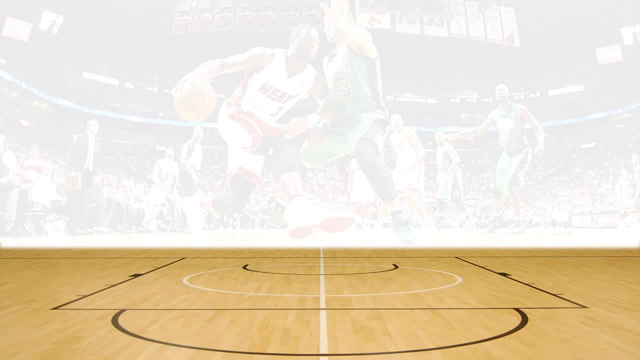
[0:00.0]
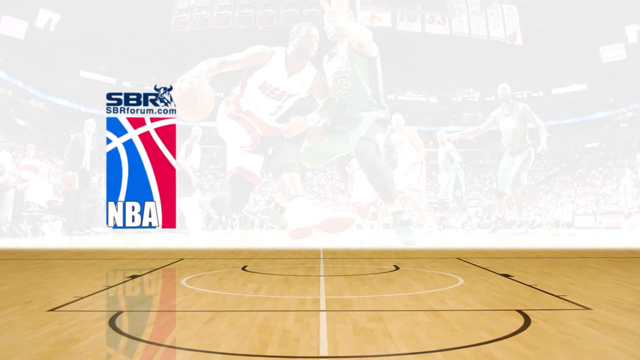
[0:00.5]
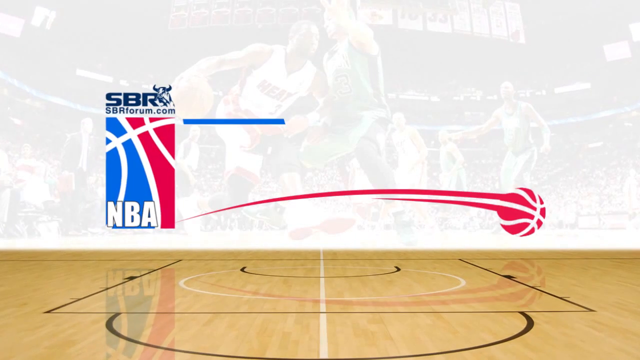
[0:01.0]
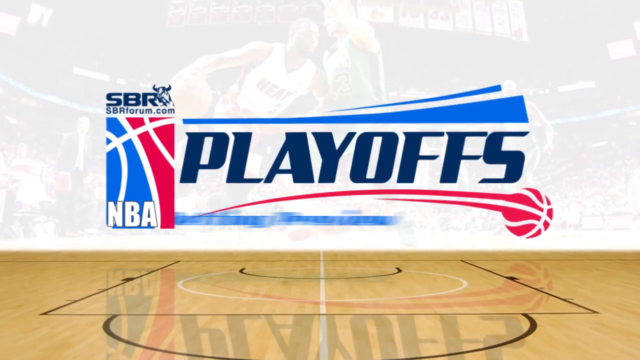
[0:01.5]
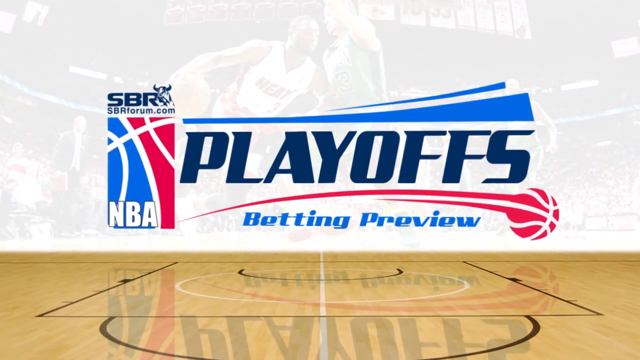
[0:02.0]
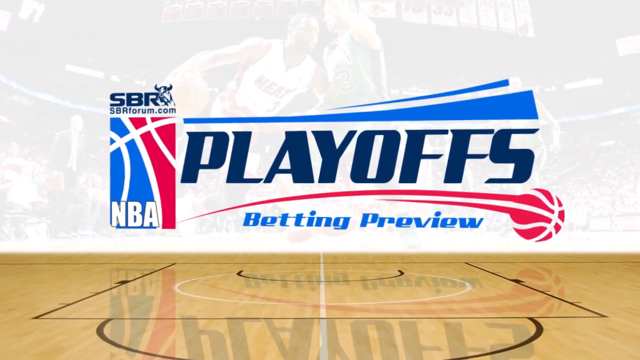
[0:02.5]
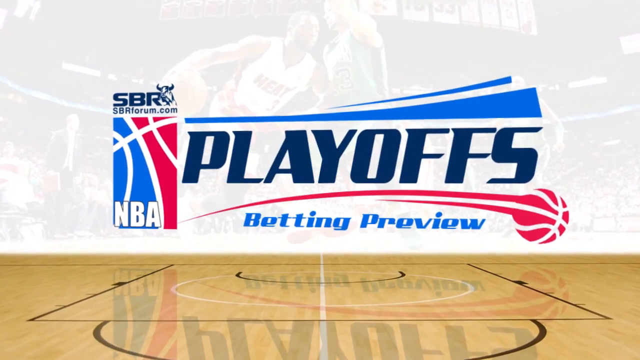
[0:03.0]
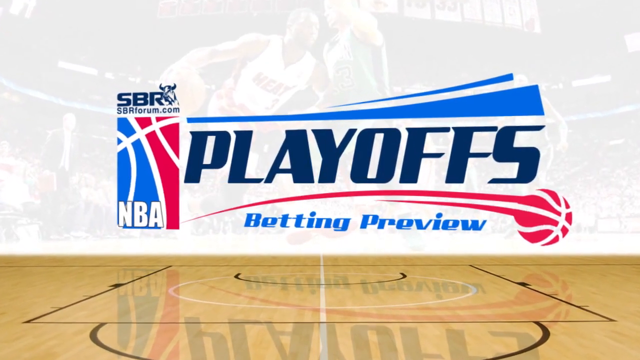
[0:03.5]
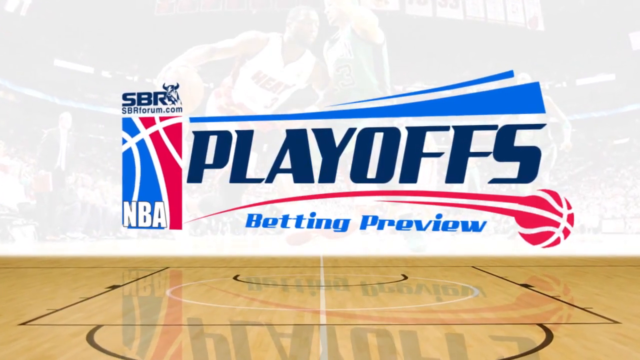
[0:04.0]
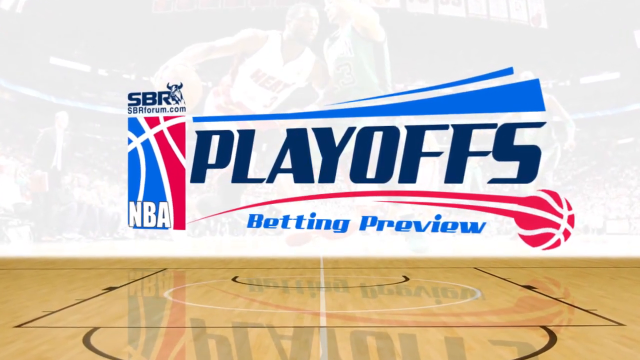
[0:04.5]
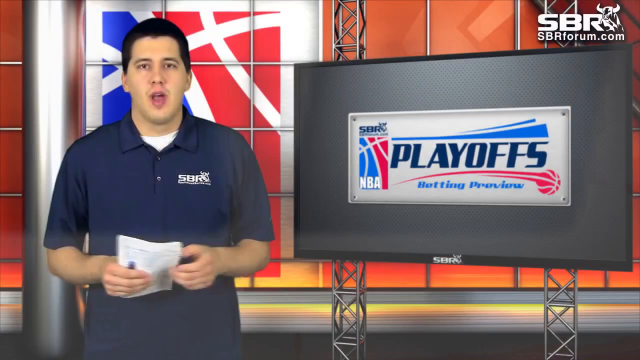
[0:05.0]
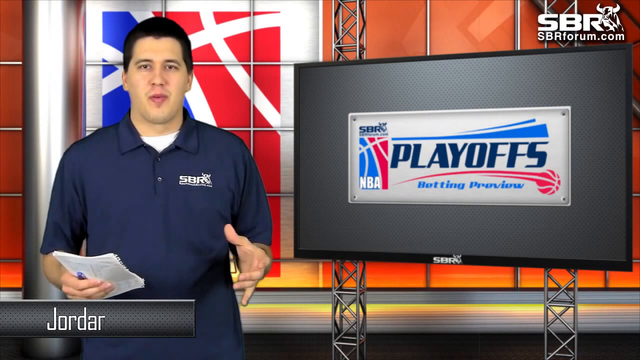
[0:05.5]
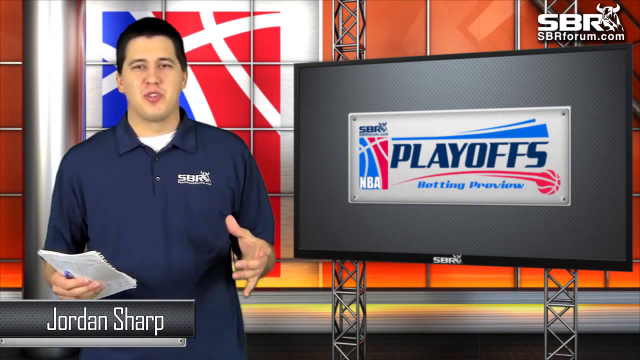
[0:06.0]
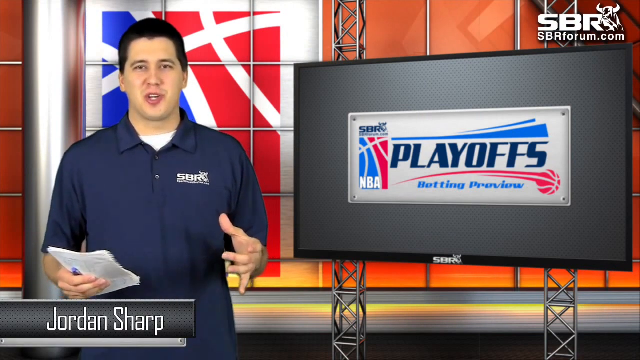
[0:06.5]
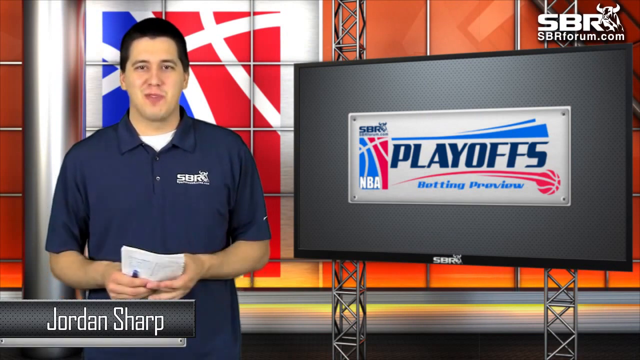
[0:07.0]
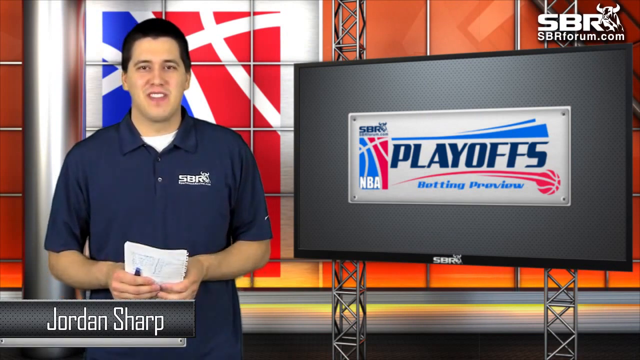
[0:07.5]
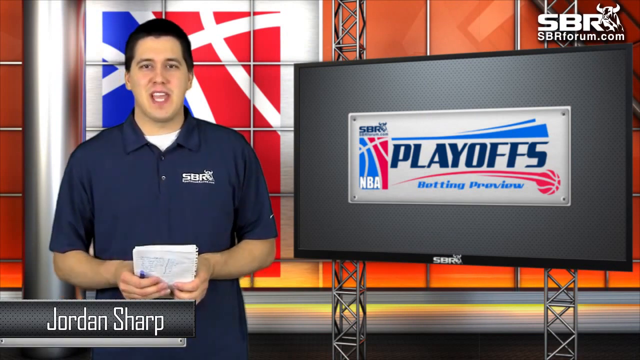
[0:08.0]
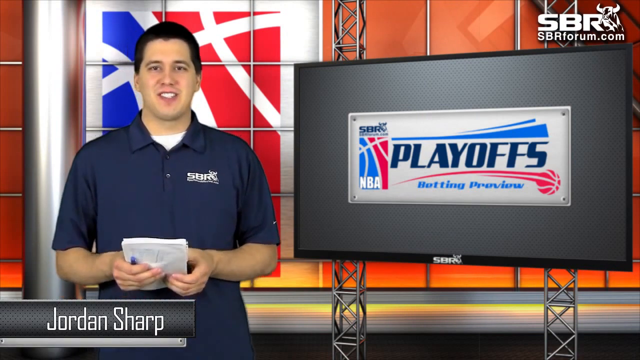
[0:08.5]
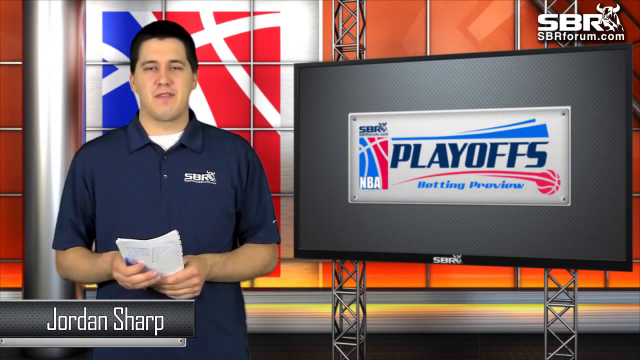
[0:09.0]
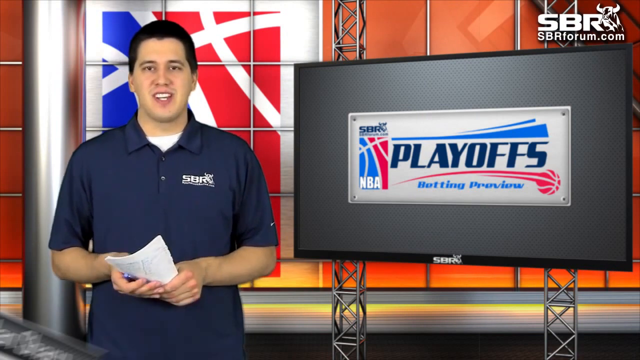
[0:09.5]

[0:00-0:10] A man talks to the audience while wearing a blue polo shirt. Text in the background reads "SVRNK Playhouse," and the top right of the screen shows the initials "SVRNK."